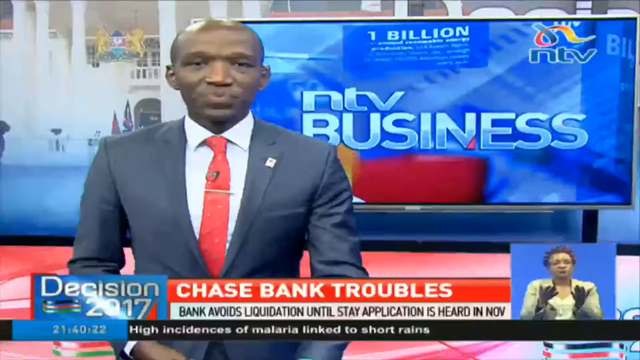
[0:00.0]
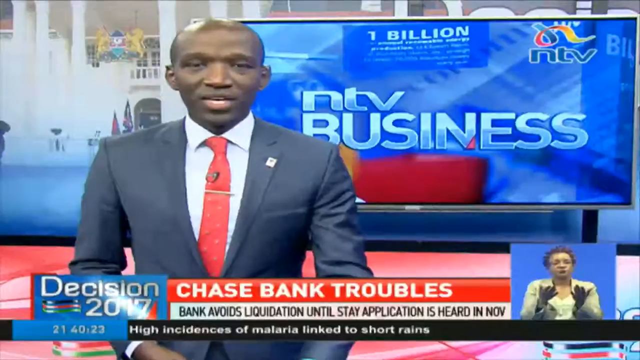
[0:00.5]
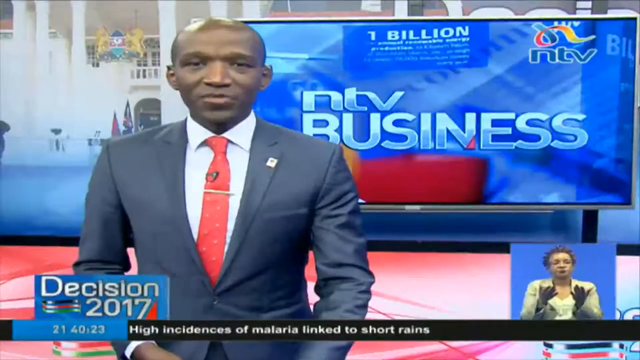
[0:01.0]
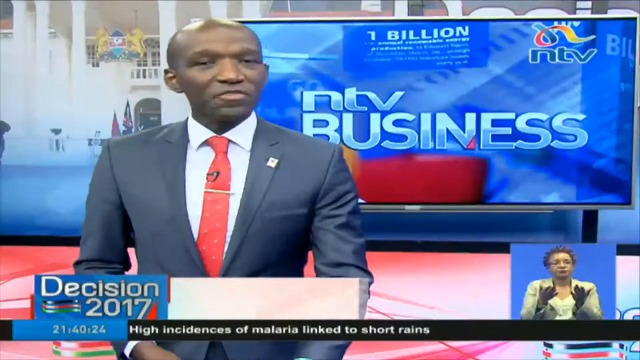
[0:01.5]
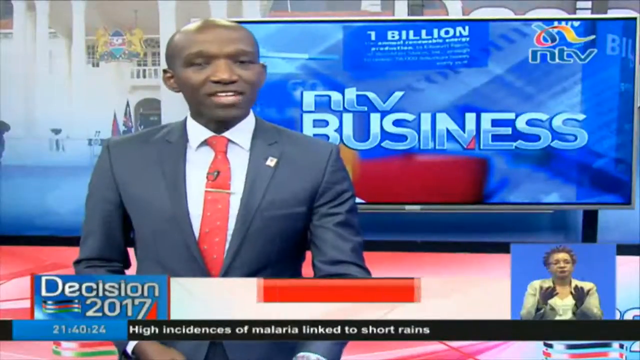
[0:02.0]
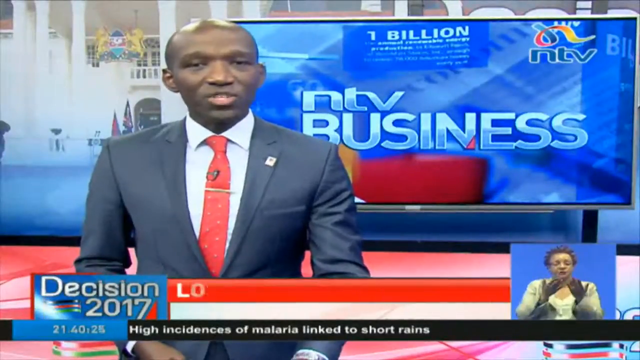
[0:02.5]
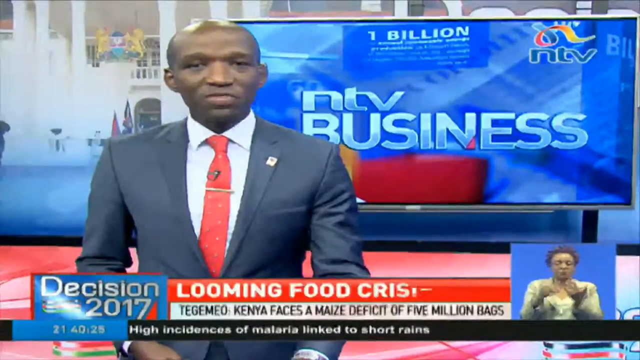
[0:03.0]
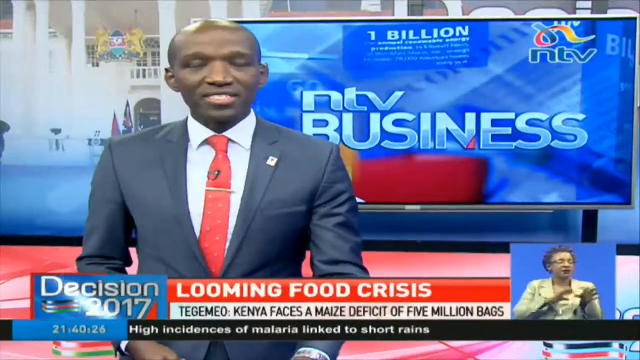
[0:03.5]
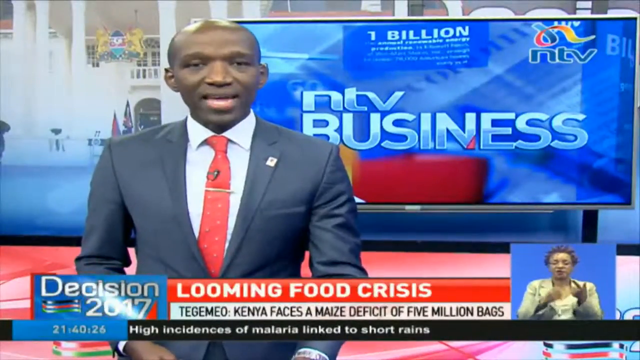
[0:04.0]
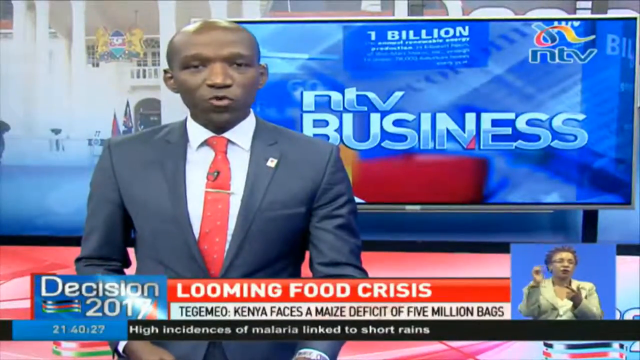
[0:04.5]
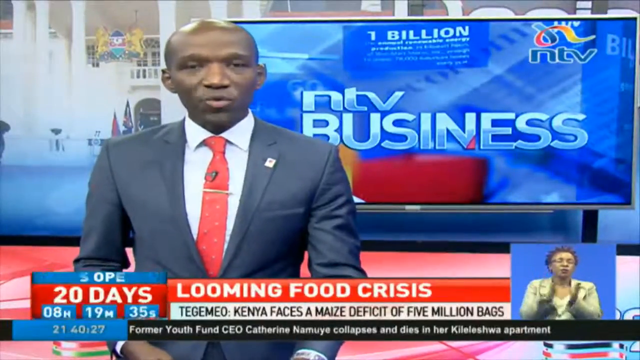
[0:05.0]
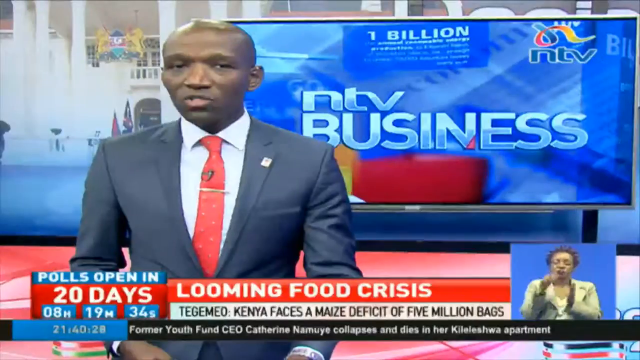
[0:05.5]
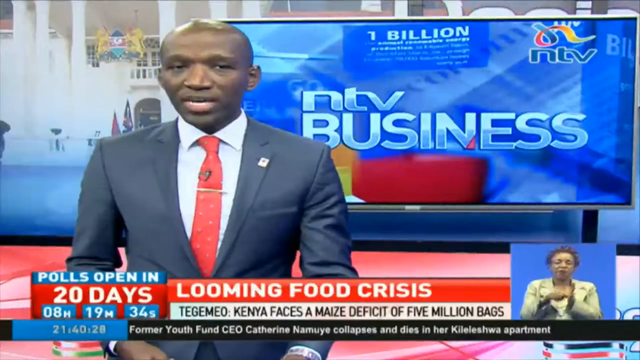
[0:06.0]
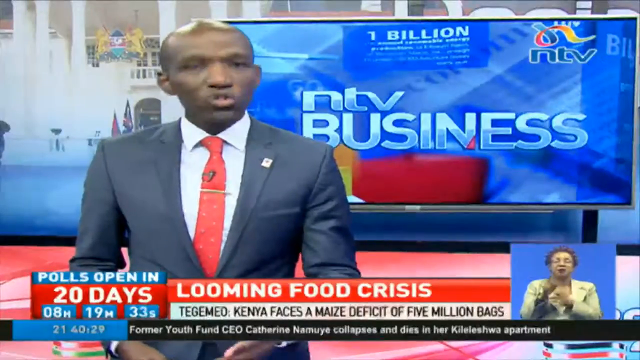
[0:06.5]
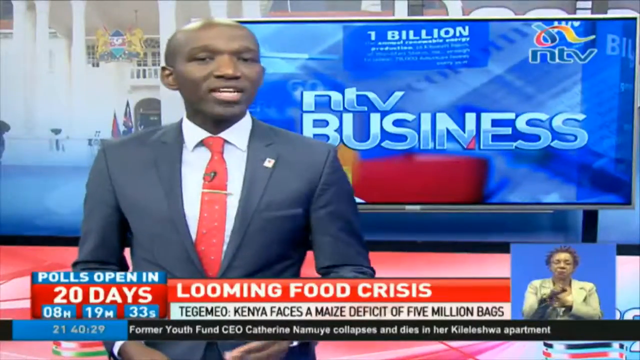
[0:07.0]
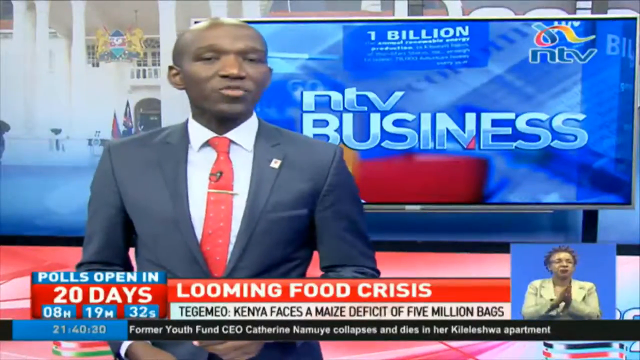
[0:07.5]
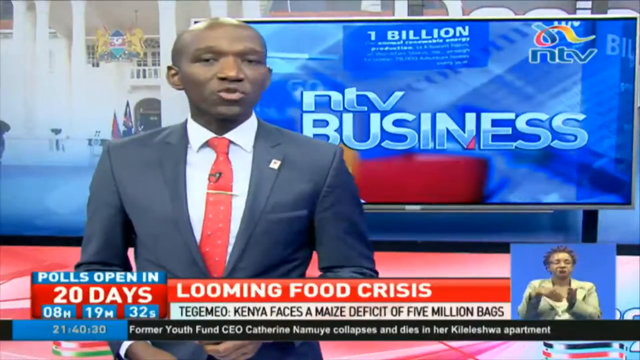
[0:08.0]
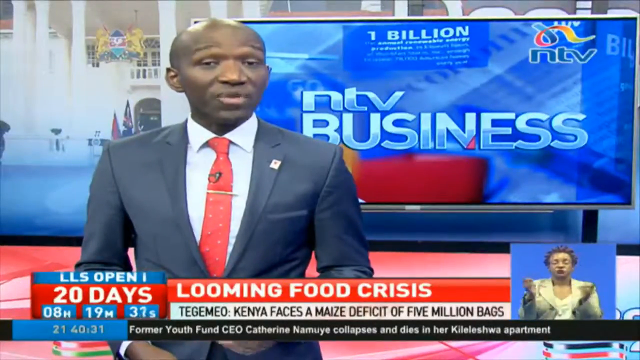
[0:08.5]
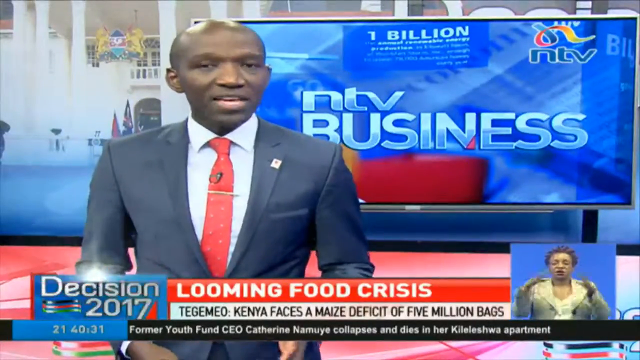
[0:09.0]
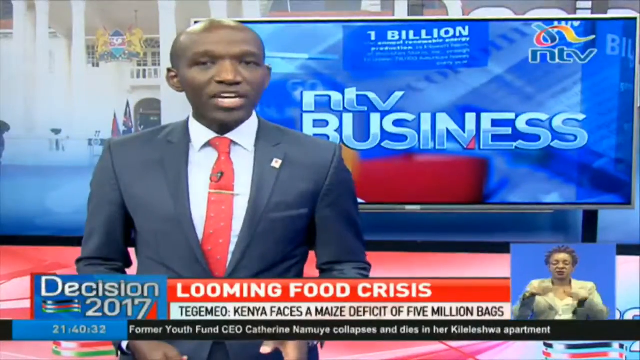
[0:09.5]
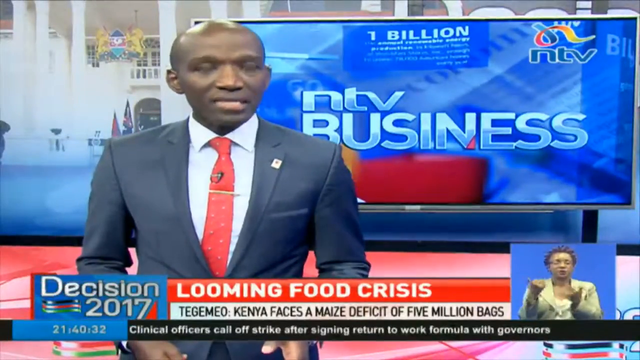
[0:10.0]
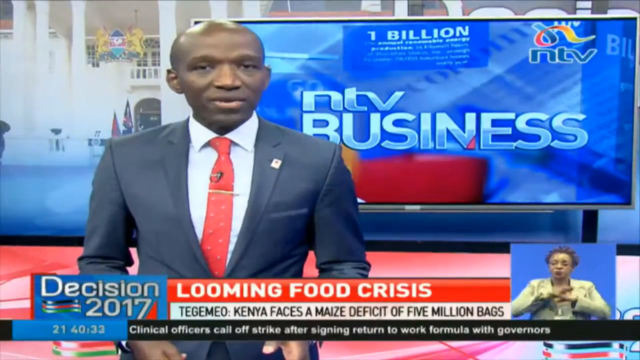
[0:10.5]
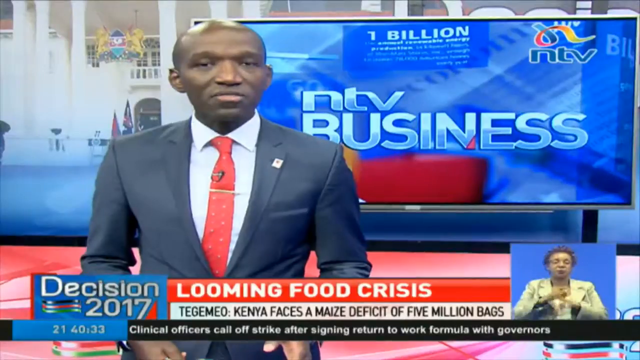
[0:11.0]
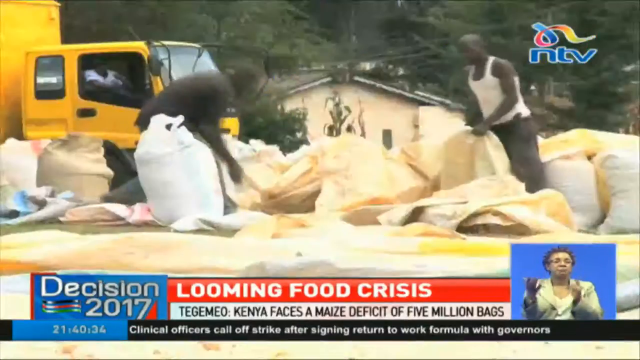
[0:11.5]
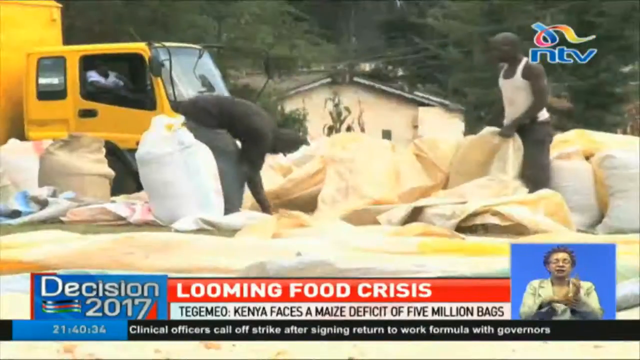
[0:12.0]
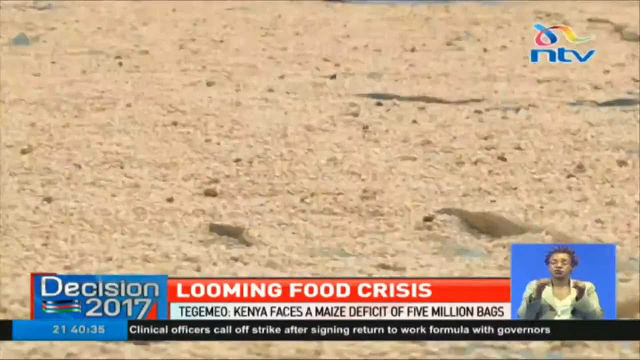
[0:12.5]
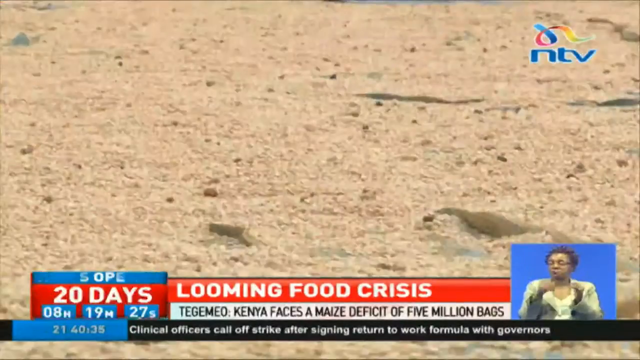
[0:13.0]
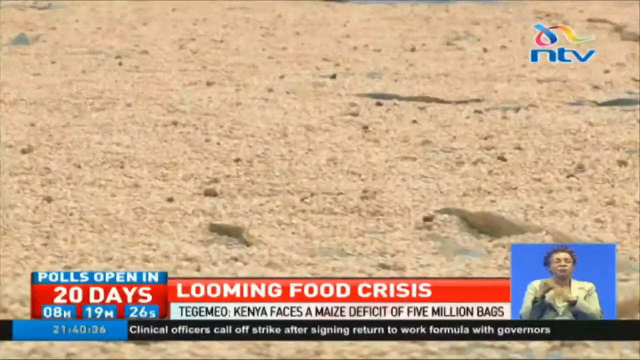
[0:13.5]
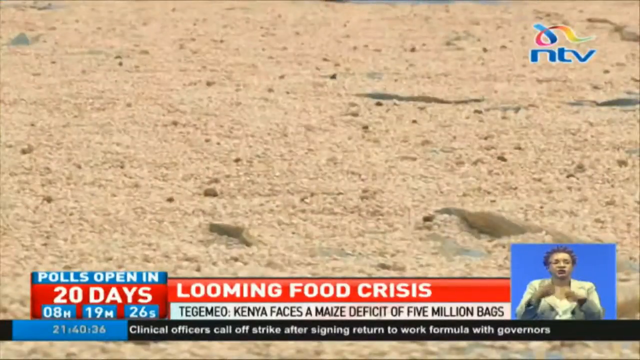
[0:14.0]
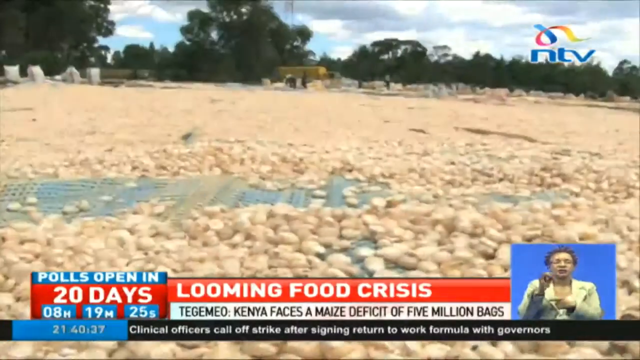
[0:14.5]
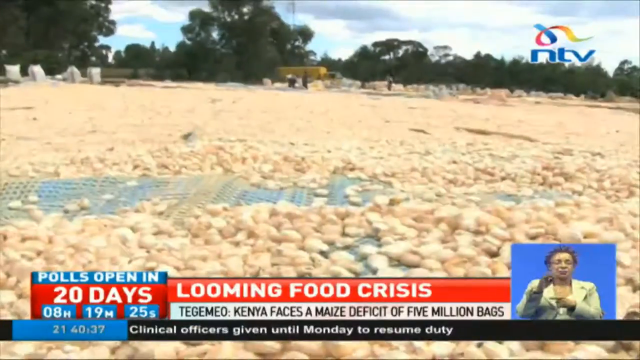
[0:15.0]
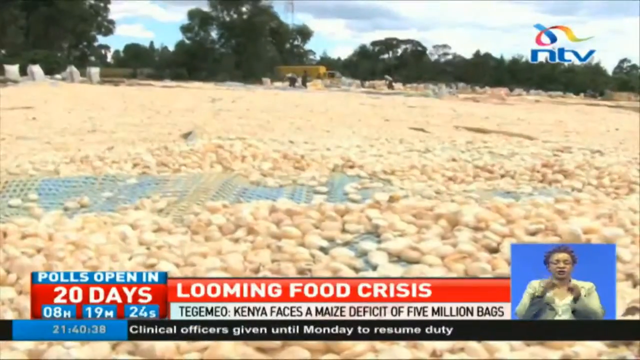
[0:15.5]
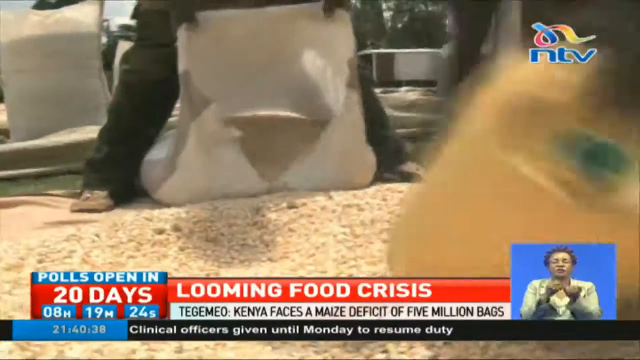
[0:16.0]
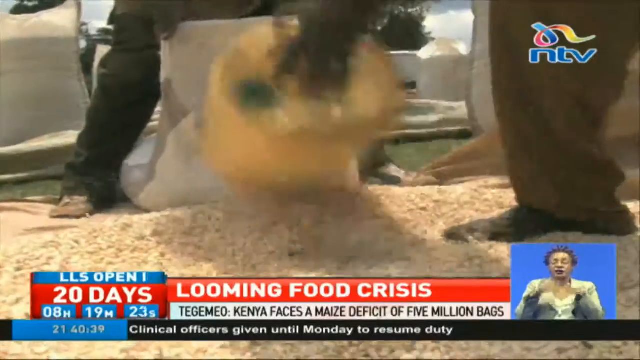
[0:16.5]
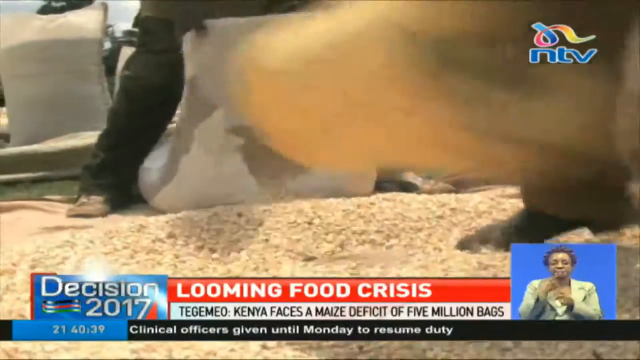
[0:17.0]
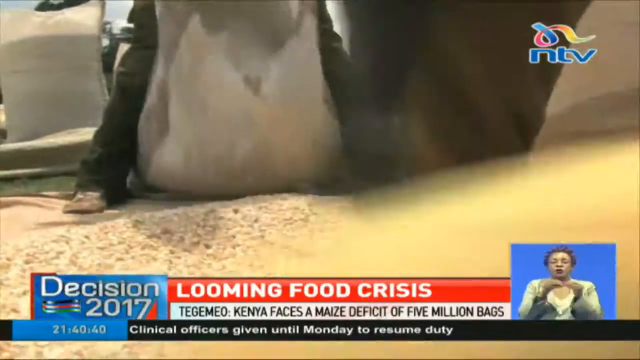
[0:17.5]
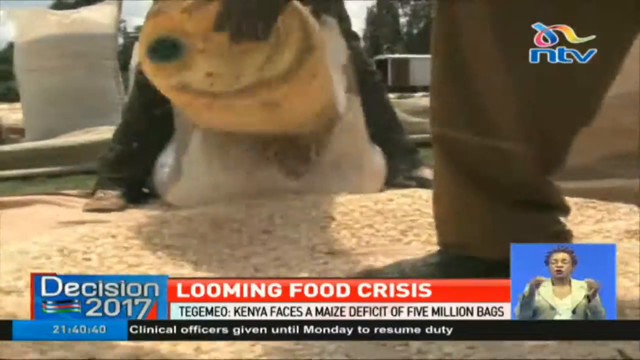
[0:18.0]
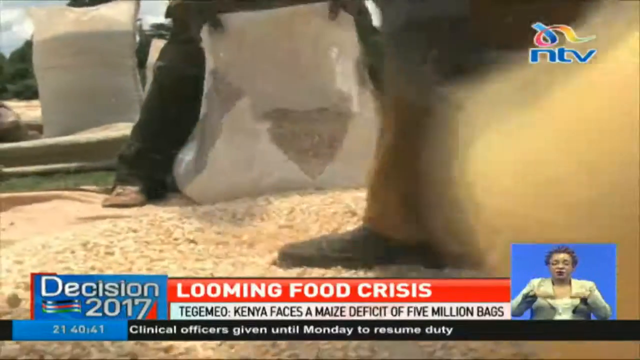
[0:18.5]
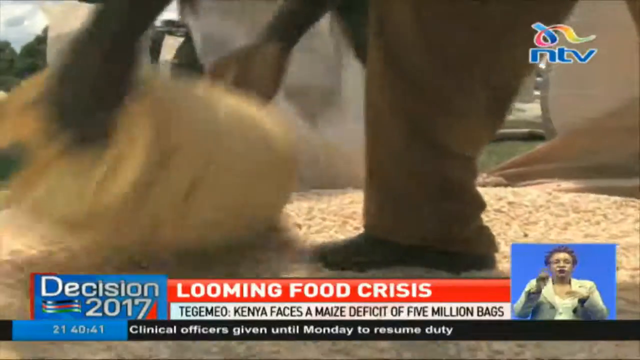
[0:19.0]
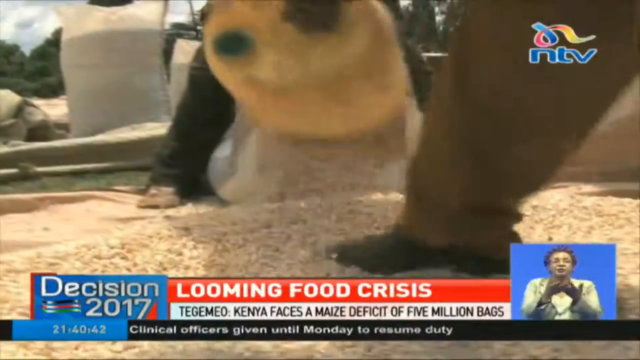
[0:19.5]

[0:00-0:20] A news clip shows what looks like "Decision 2017" on the lower left-hand side, and next to it, in white all-capital letters, "Chase bank troubles." Underneath, in a smaller black all-capital font, the text reads "Bank avoids liquidation until state application is heard in November." A man faces the screen wearing a suit that appears to be navy blue, a red tie, and a button-down collared shirt that could be light gray or white. He is standing in front of something, more toward the right-hand side, that reads "MTV business." The text then changes to "Looming food crisis," followed by a place name spelled TEGEMEO and "Kenya faces a MAIZE deficit of five million bags," and "Polls open in 20 days." Someone in the lower right-hand corner is doing sign language. Farm workers and the food product are then shown.